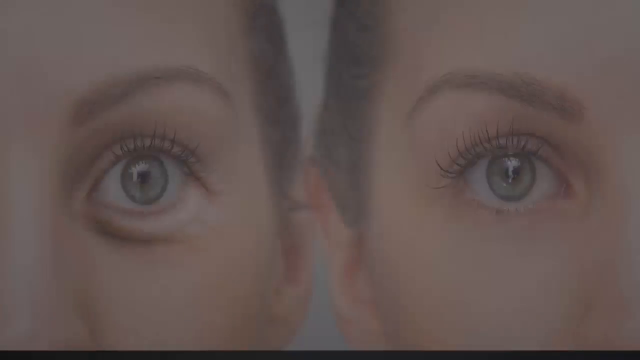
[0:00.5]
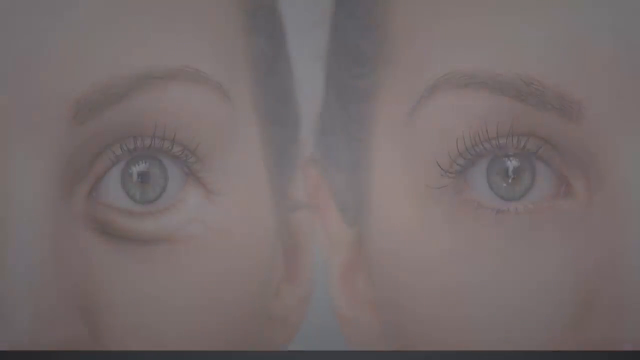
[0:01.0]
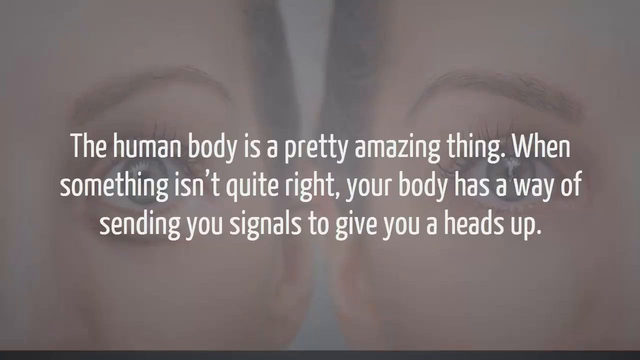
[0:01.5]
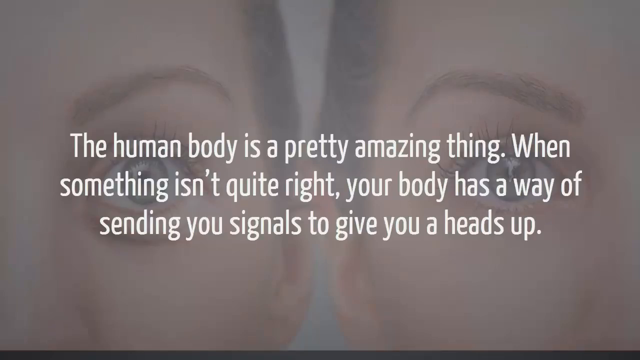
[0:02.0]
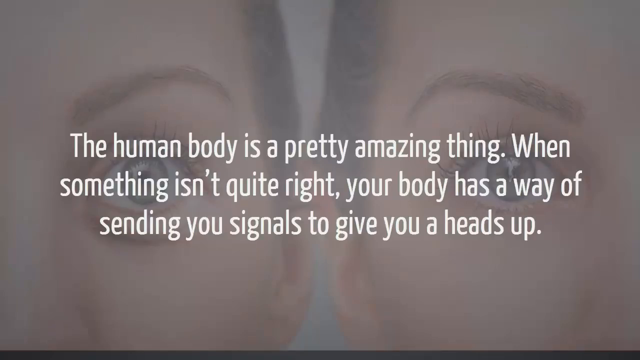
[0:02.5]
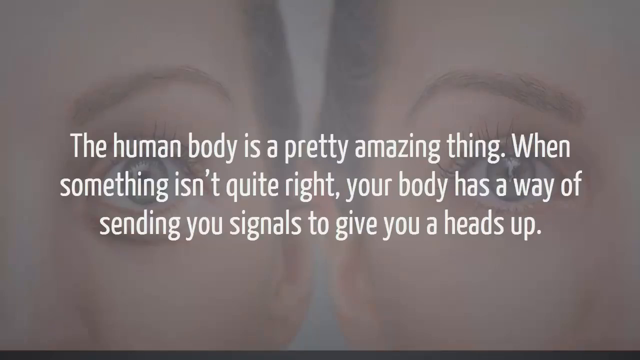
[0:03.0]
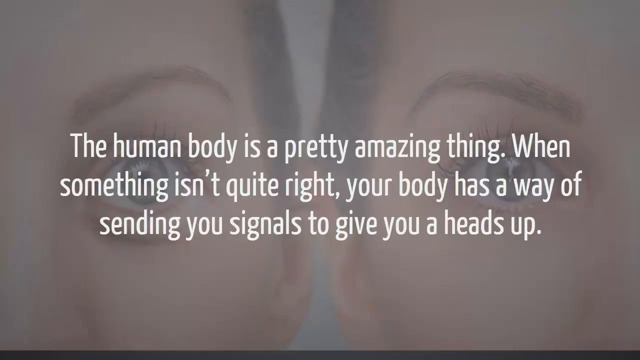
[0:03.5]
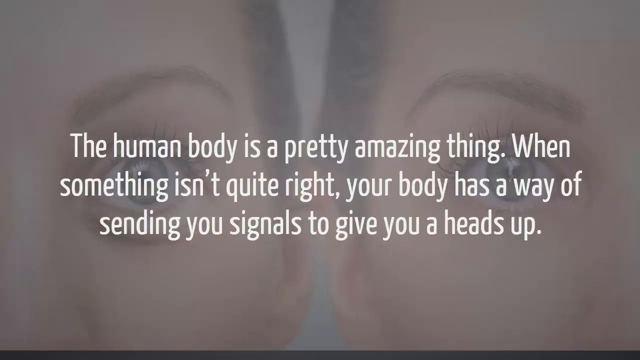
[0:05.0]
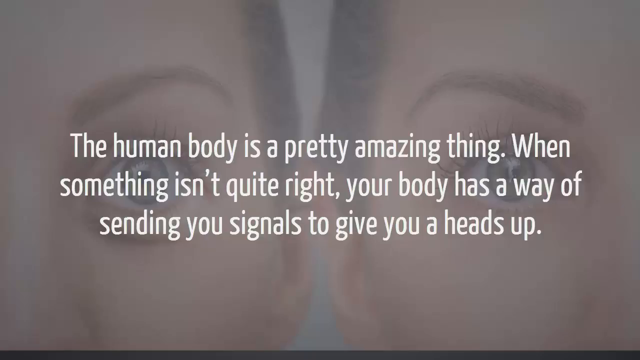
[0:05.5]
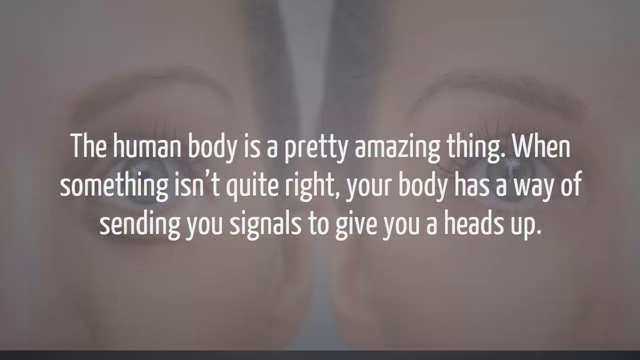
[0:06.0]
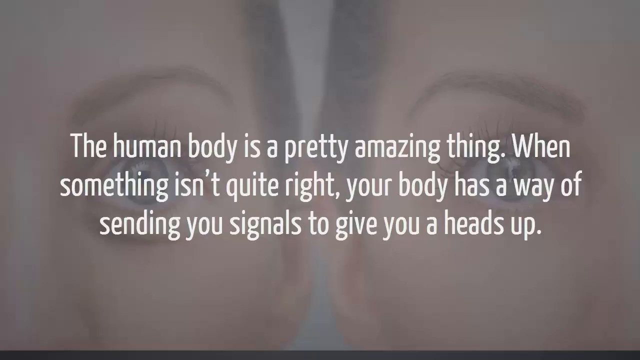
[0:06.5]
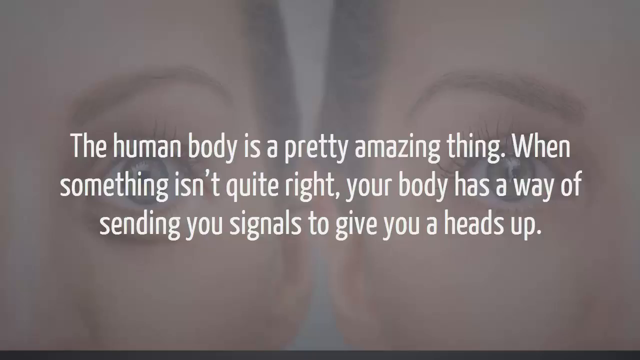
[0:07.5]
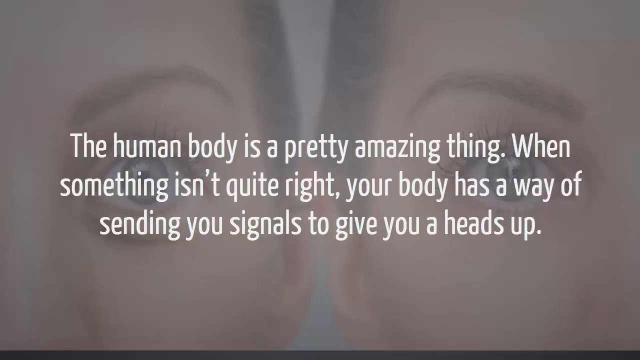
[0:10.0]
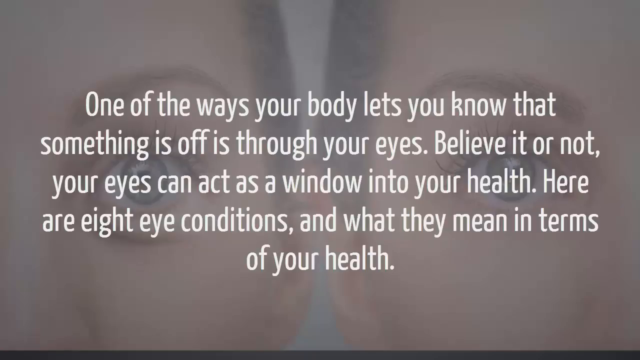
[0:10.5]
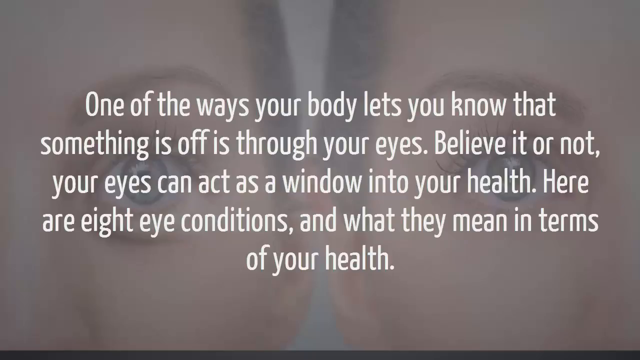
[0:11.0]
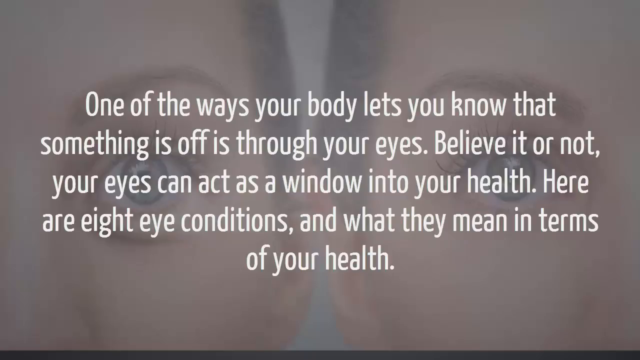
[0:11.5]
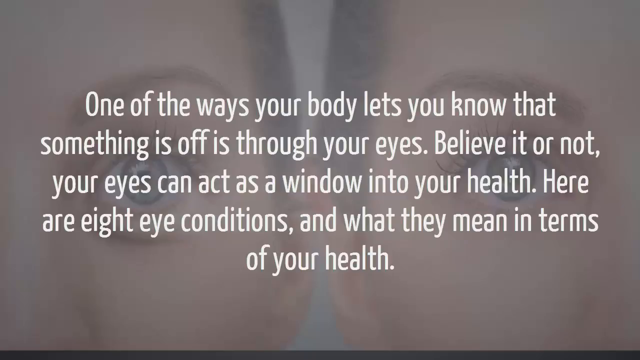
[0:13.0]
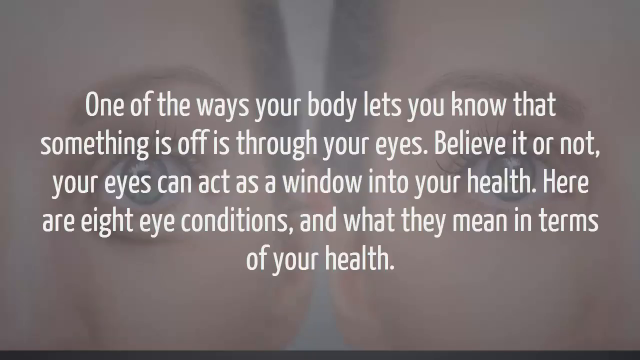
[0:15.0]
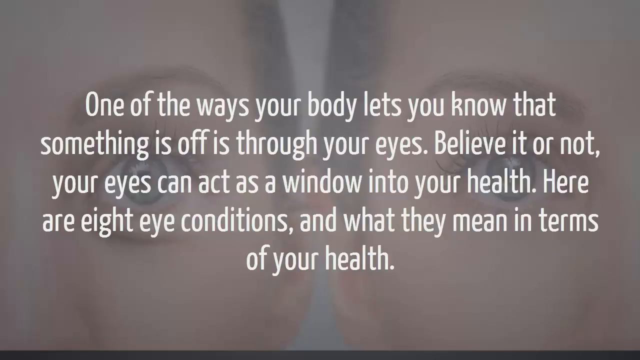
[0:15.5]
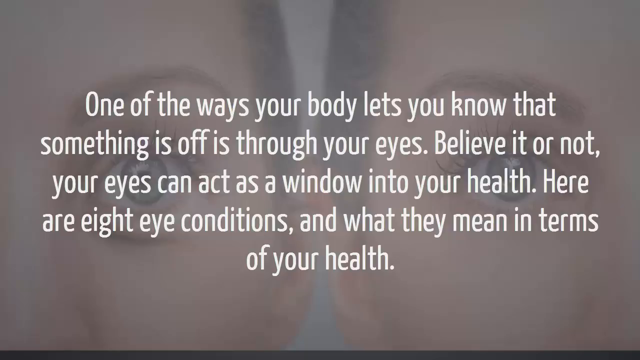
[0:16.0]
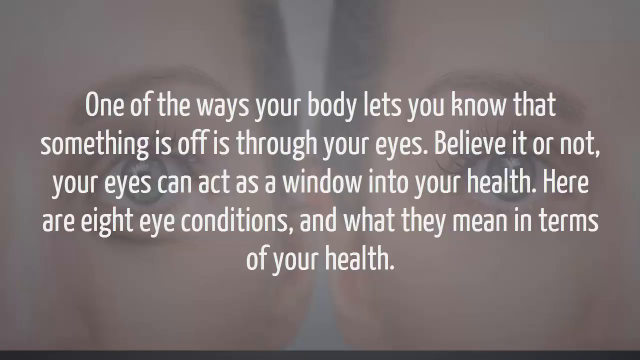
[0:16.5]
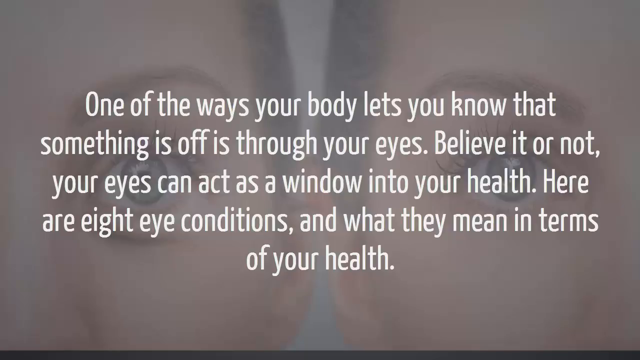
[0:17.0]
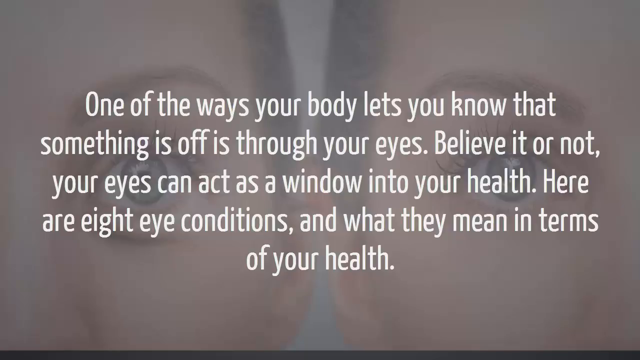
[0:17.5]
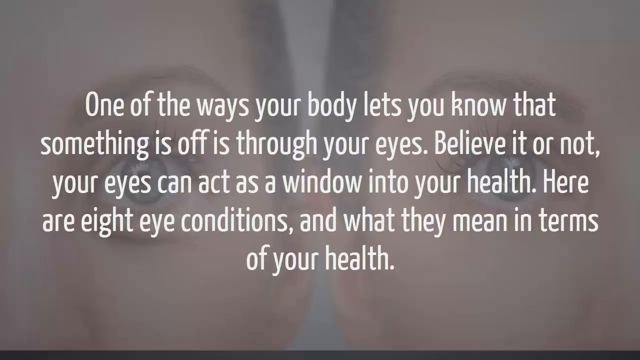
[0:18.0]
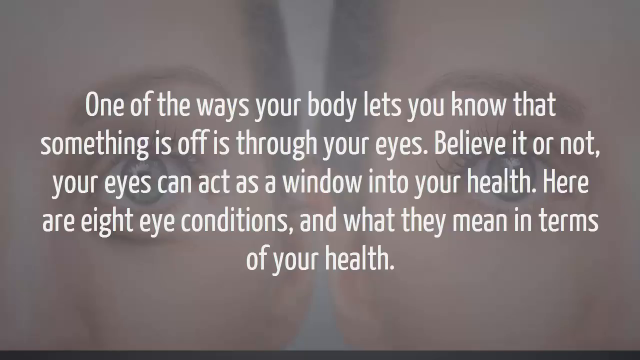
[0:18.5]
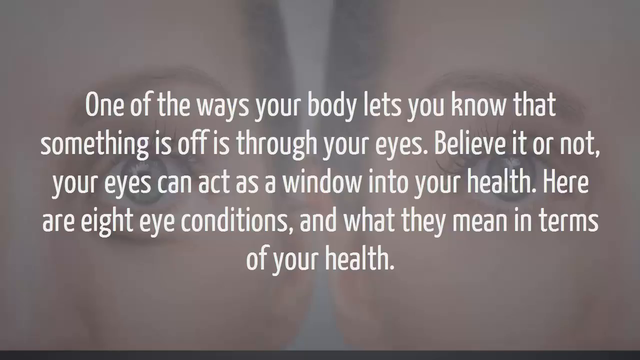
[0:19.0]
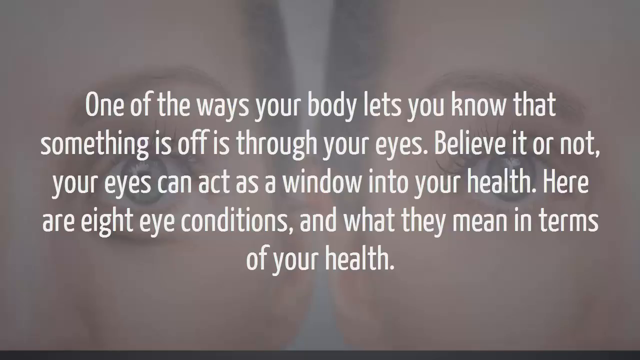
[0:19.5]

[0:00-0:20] Two human eyes appear, one on the right and one on the left, in a close look at the eyes themselves. The video then transitions to text on the screen that reads: "The human body is a pretty amazing thing. When something isn't quite right, your body has ways of sending you signals to give you a heads up." In the background, the view looks directly onto two women's faces, one on the right and one on the left. The next text on the screen reads: "One of the ways your body lets you know that something is off is through your eyes. Believe it or not, your eyes can act as a window into your health. Here are eight eye conditions and what they mean in terms of your health."